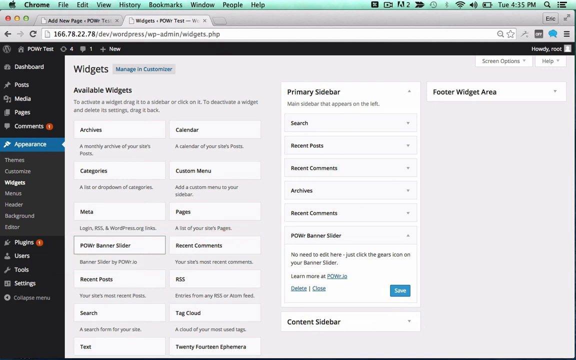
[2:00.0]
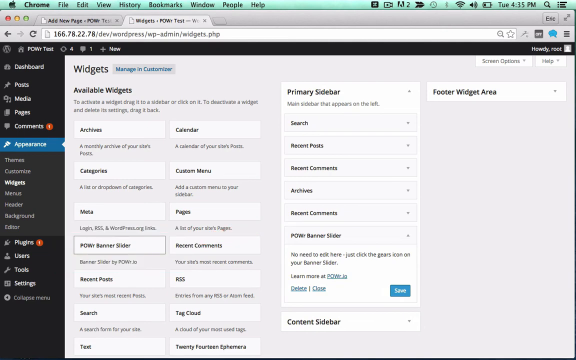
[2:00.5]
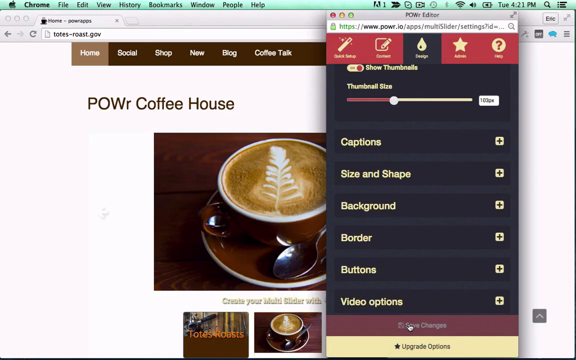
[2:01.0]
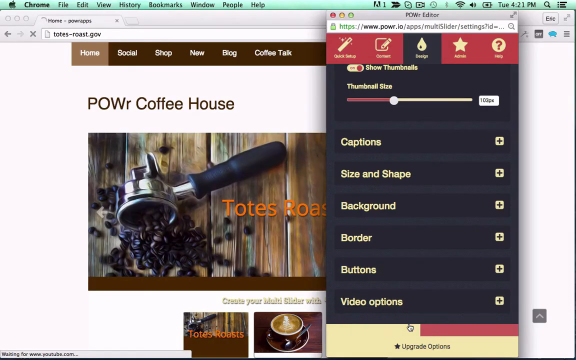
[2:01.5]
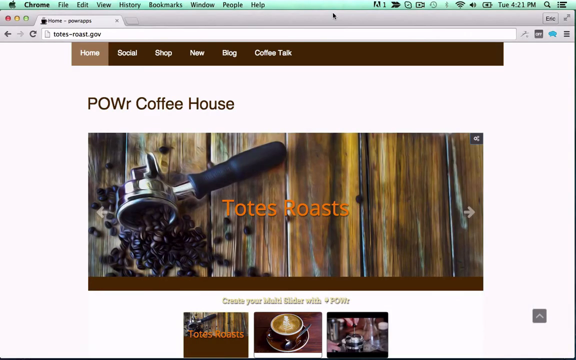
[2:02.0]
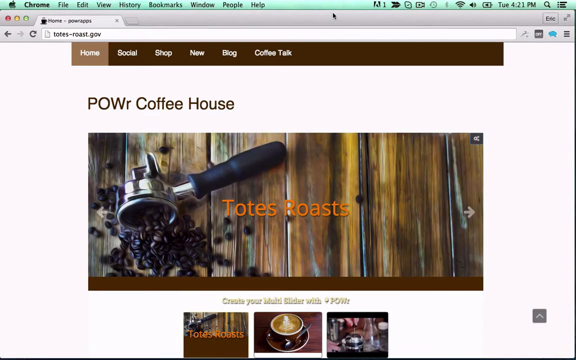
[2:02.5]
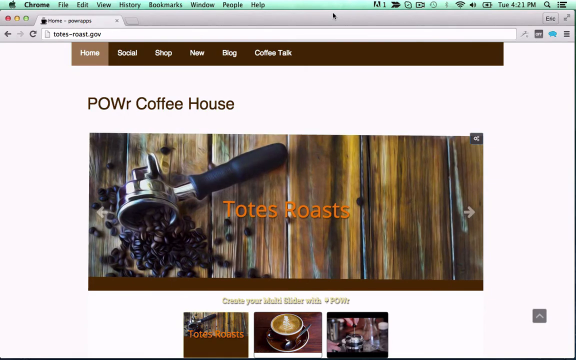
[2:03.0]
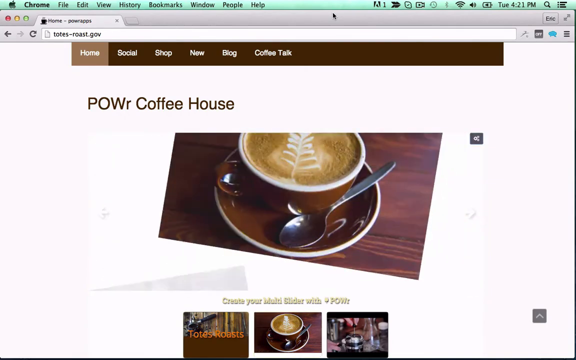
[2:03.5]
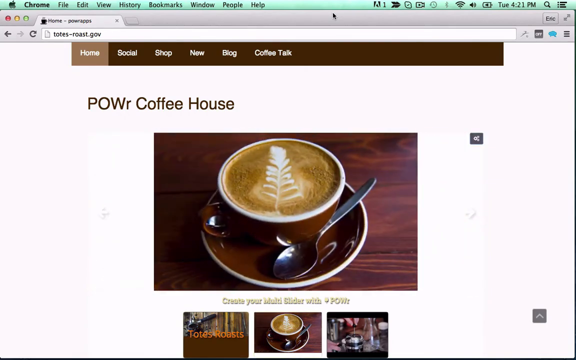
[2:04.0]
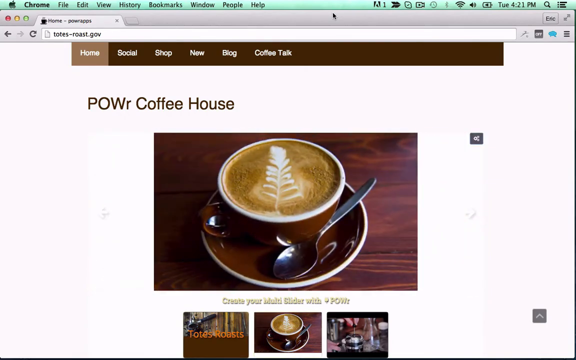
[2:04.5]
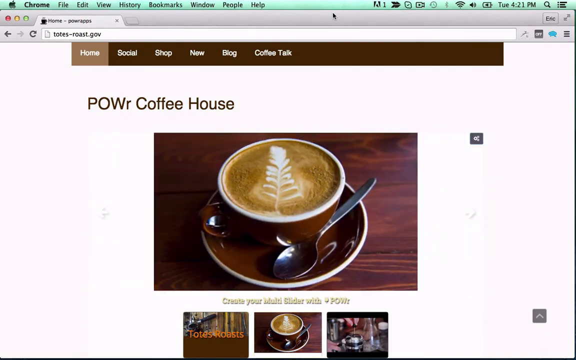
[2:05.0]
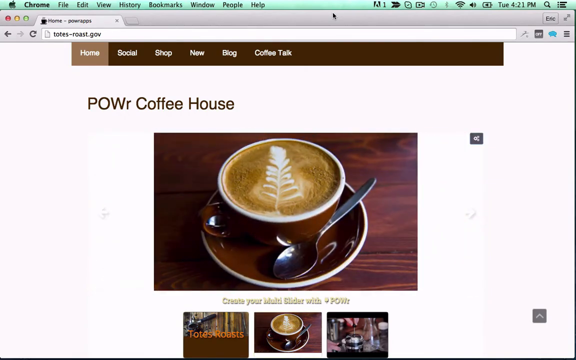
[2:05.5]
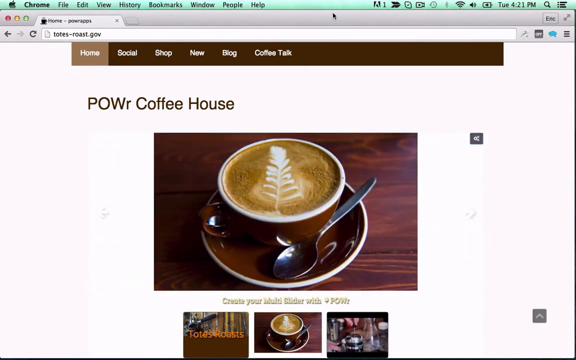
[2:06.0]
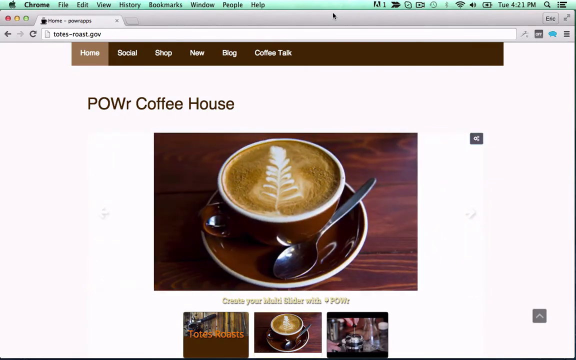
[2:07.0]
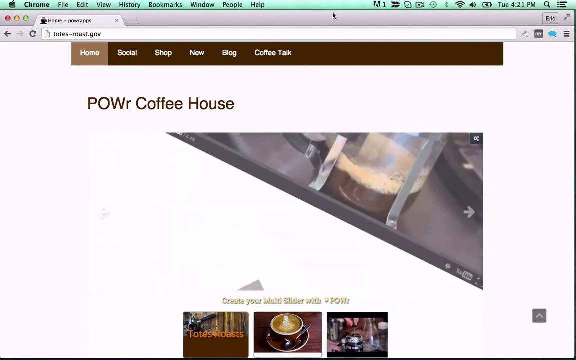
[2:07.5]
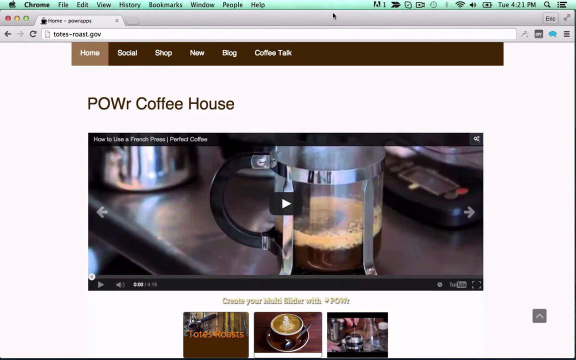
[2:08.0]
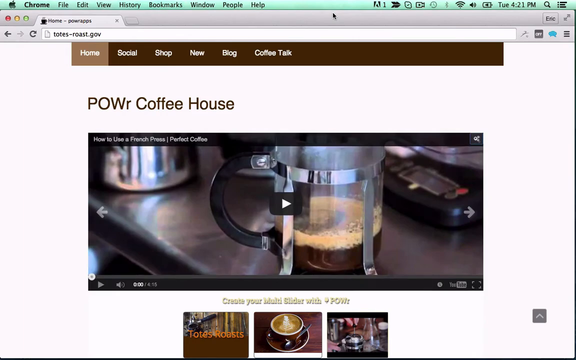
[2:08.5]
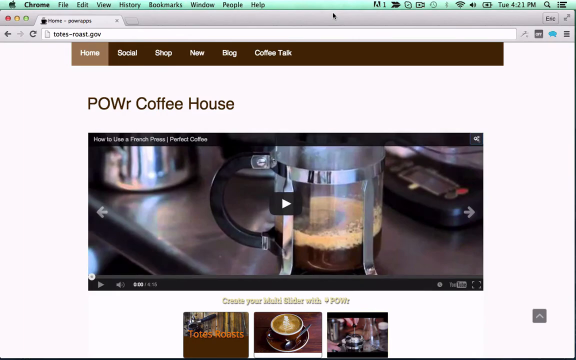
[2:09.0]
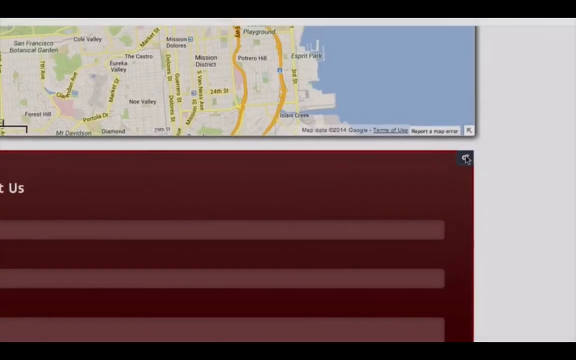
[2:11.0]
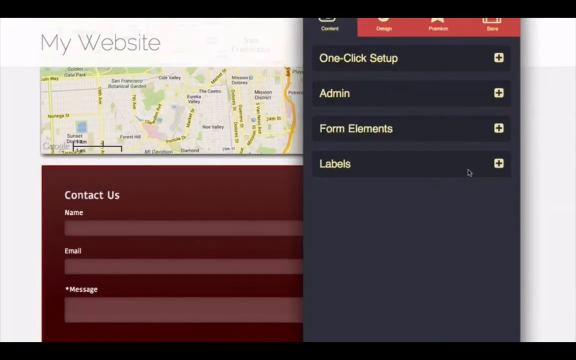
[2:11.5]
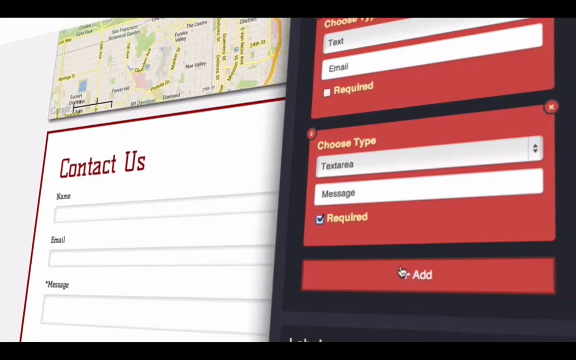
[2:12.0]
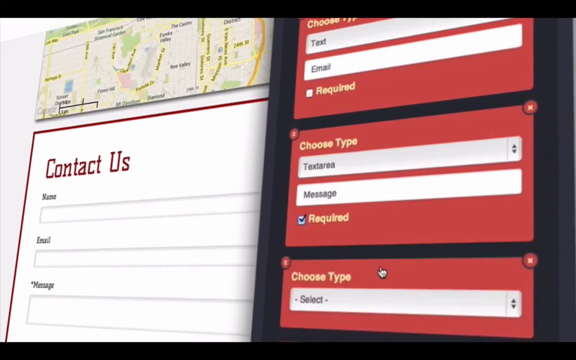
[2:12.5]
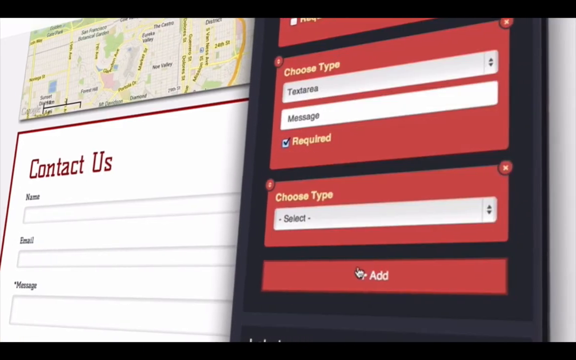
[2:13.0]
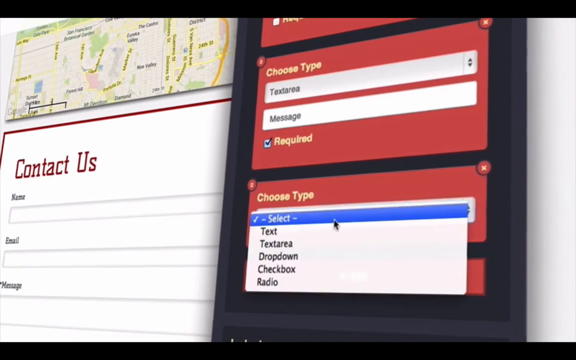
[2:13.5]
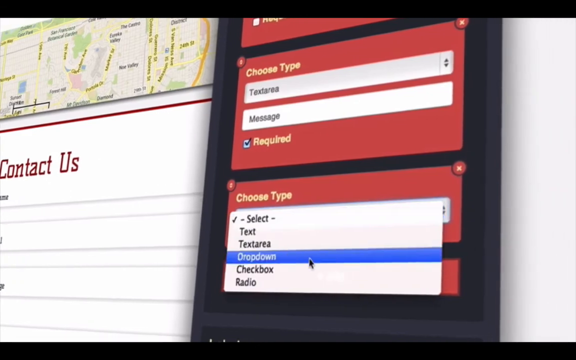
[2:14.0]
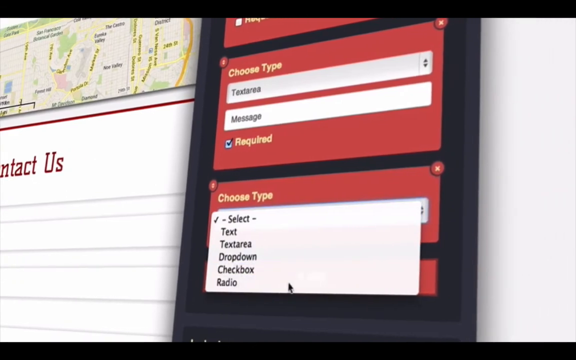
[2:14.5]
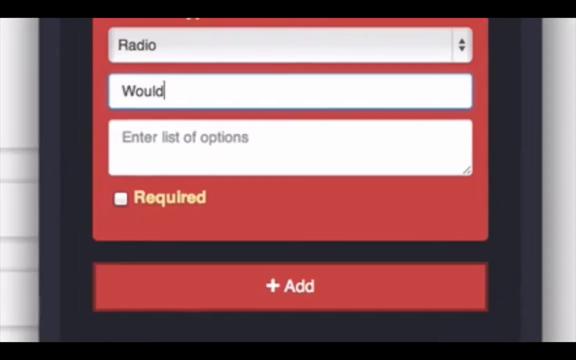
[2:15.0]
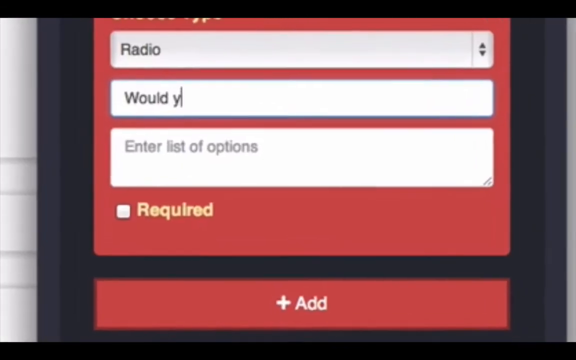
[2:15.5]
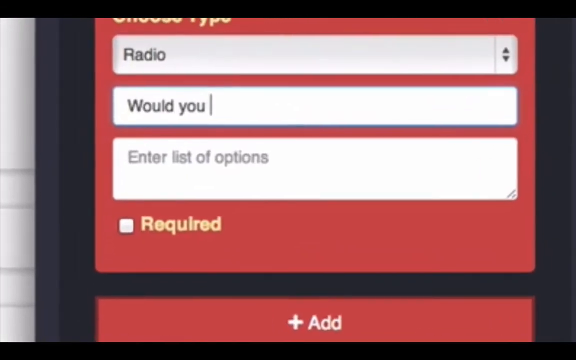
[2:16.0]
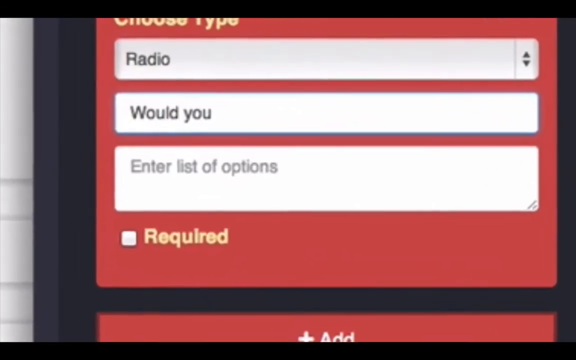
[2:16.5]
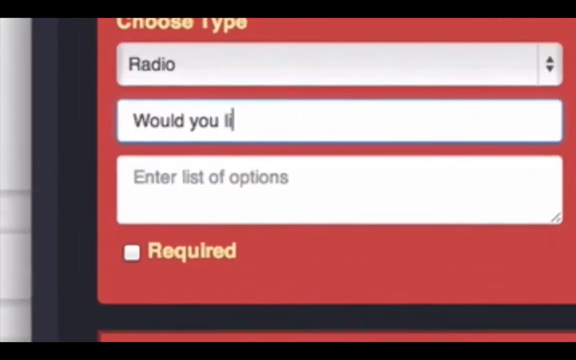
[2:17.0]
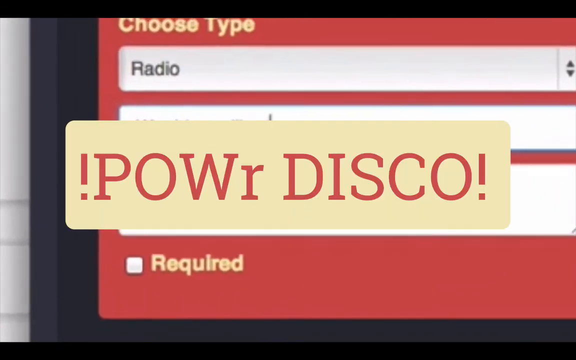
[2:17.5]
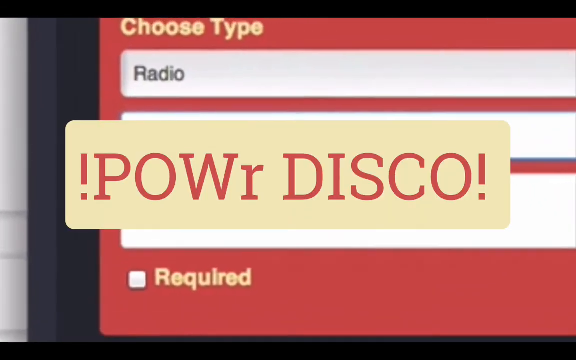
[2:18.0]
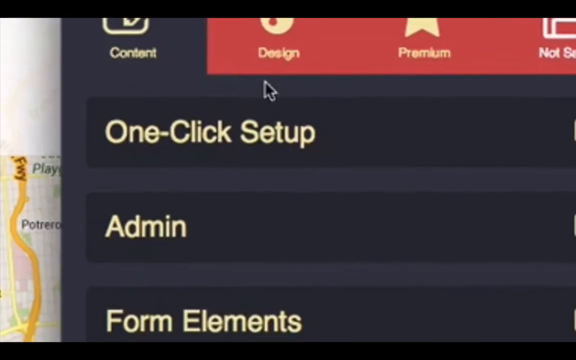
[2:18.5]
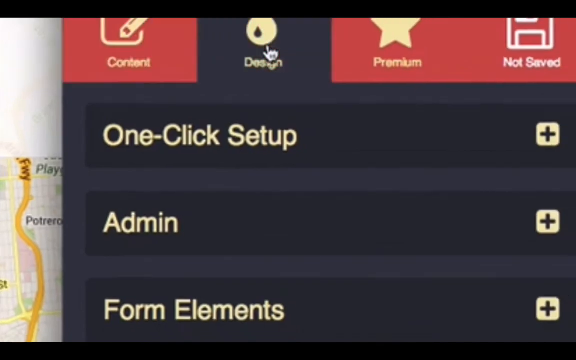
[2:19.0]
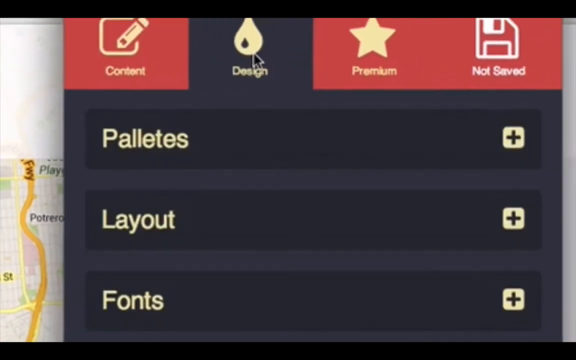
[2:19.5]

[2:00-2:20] A page says "Power Coffeehouse" and shows a cup of coffee with something like a tree made in the foam. They click on an area that says "choose type" on the computer in the background and type "would you like", but before it can be fully read, a beige bar pops up in the middle with red print reading "!Power Disco!", with an exclamation point at the beginning and end. They click on "design", and it quickly goes to a page that says "widgets". In the background there are lots of areas that could be clicked; one of the pictures says "totes roast", and there is a video about coffee and the options on the screen.